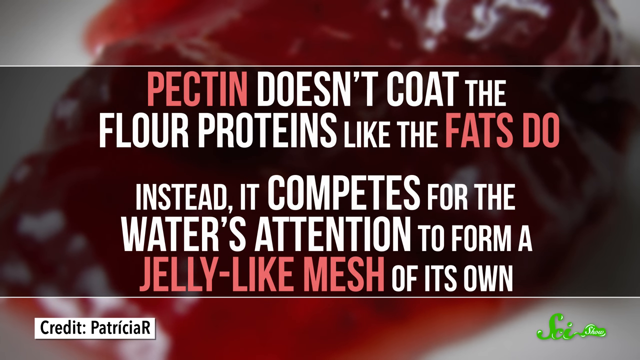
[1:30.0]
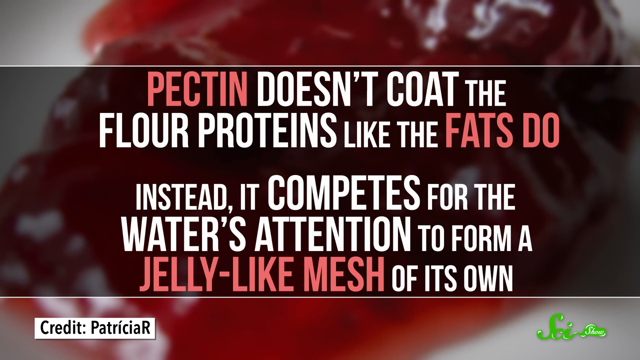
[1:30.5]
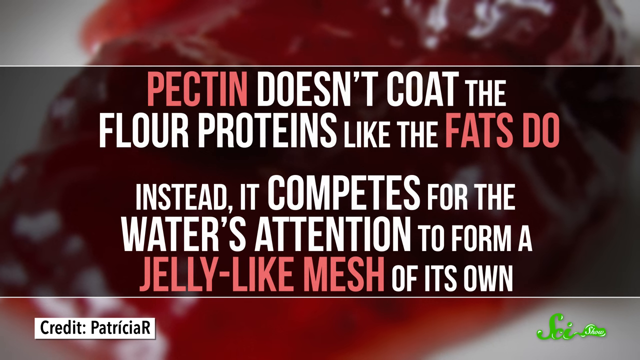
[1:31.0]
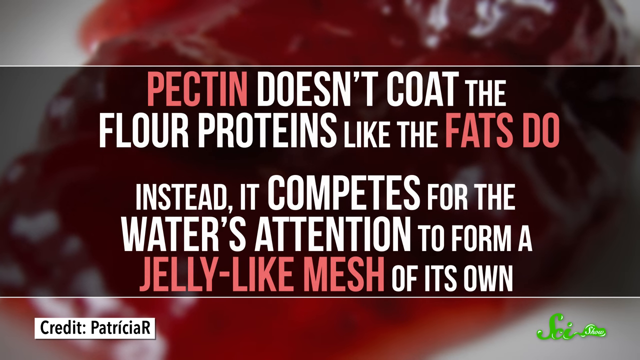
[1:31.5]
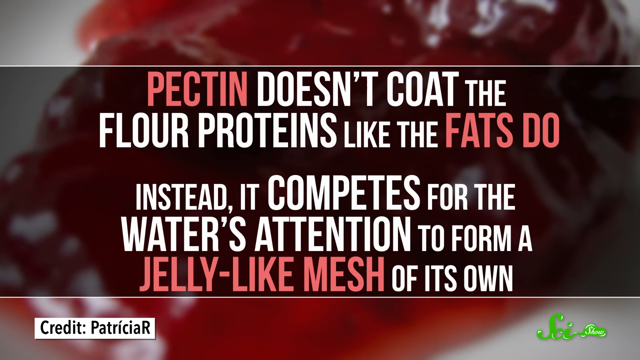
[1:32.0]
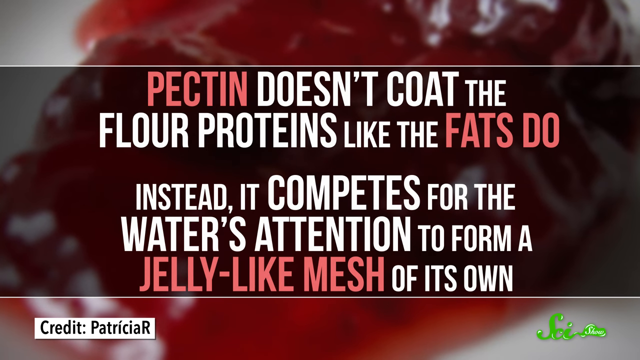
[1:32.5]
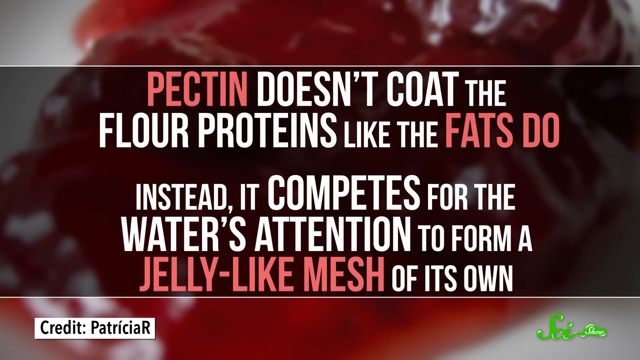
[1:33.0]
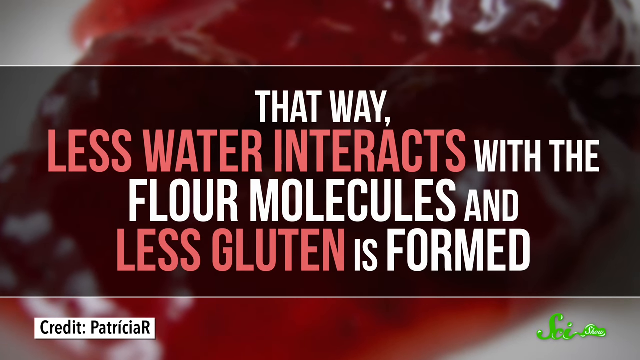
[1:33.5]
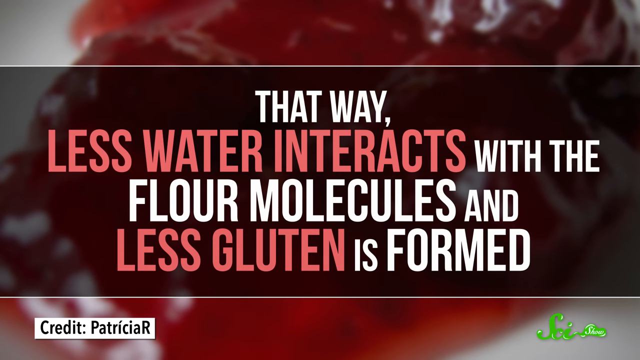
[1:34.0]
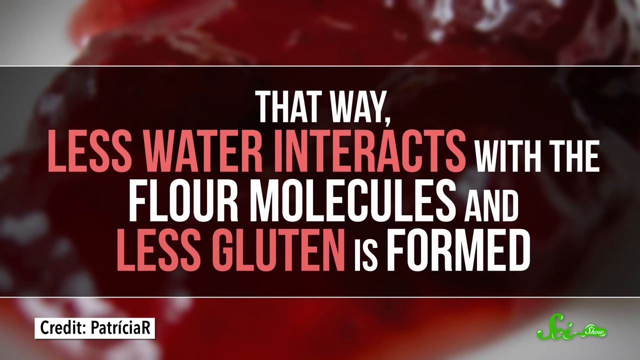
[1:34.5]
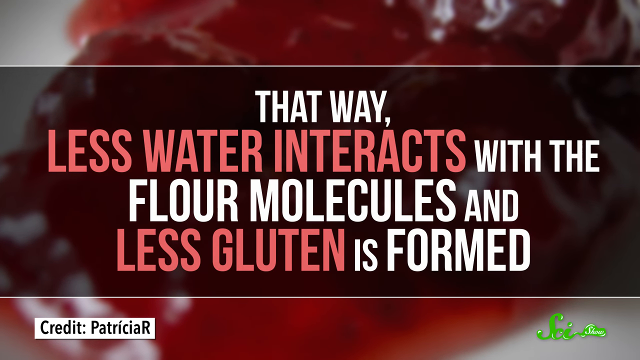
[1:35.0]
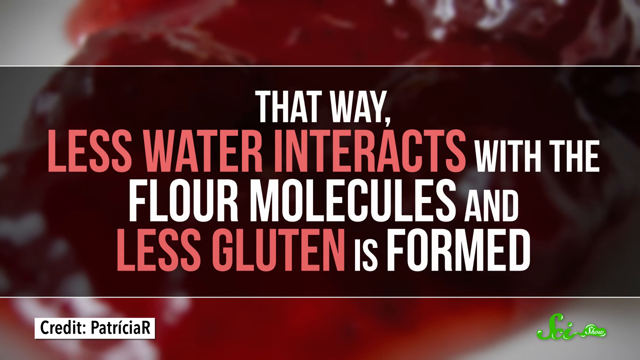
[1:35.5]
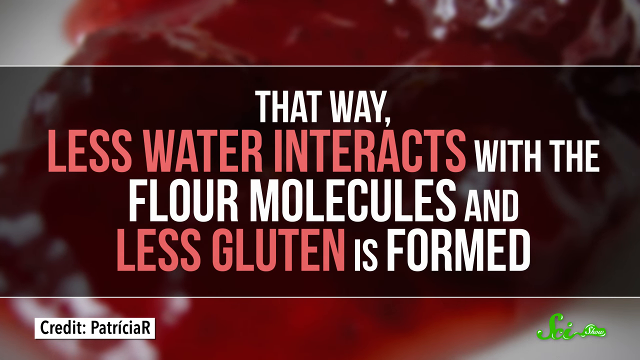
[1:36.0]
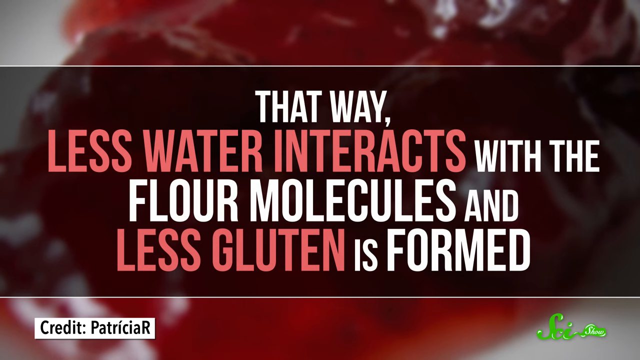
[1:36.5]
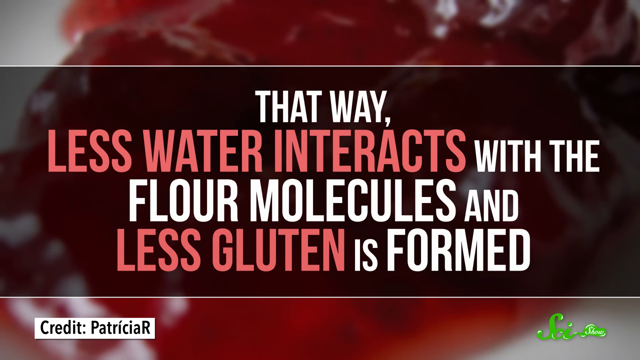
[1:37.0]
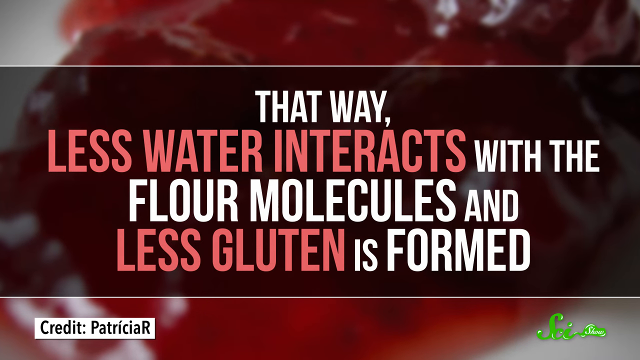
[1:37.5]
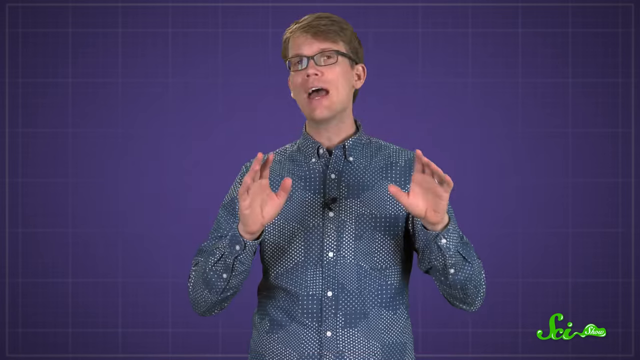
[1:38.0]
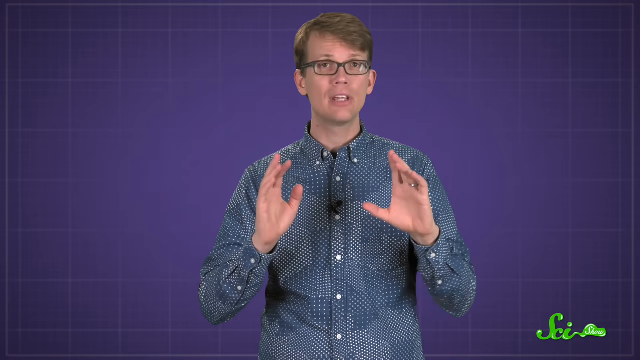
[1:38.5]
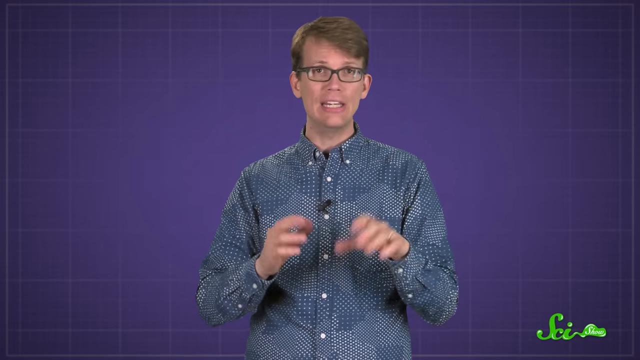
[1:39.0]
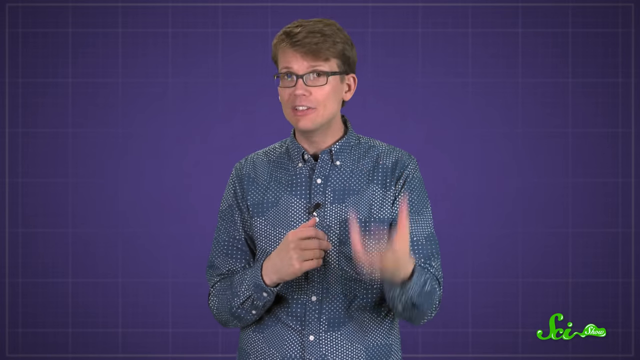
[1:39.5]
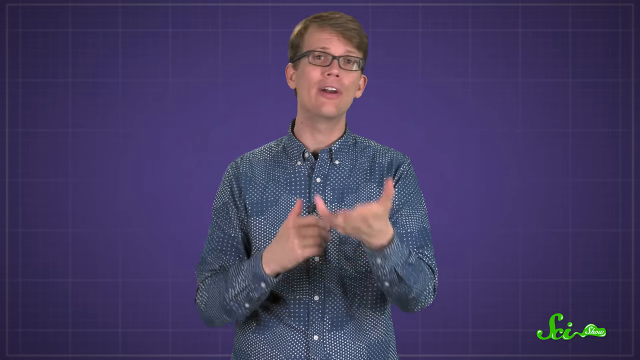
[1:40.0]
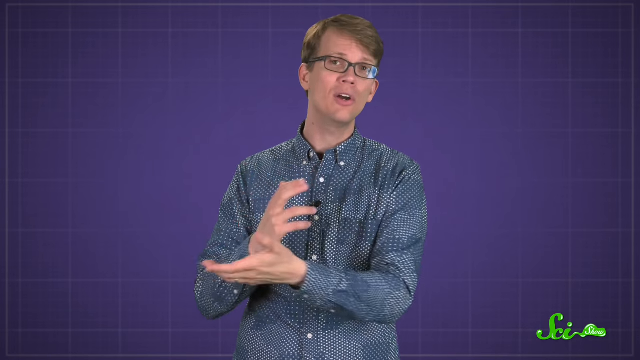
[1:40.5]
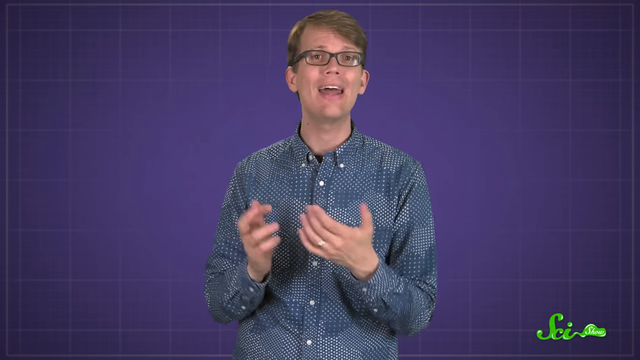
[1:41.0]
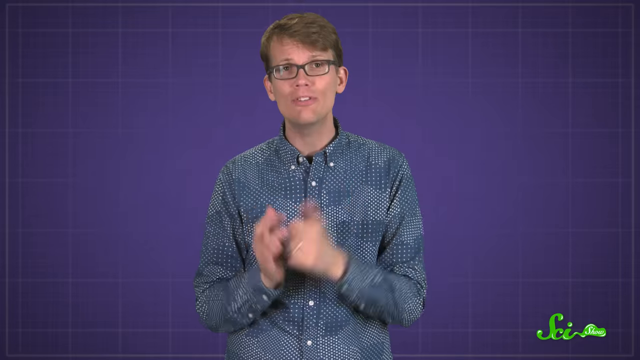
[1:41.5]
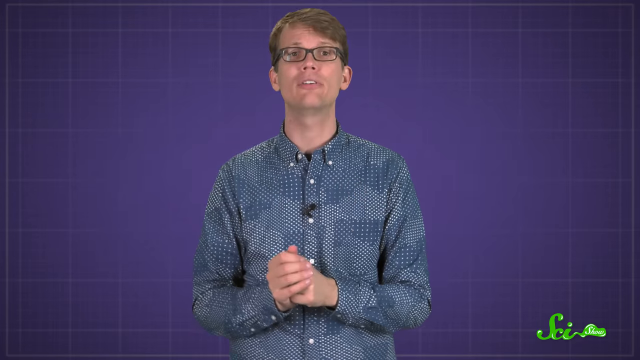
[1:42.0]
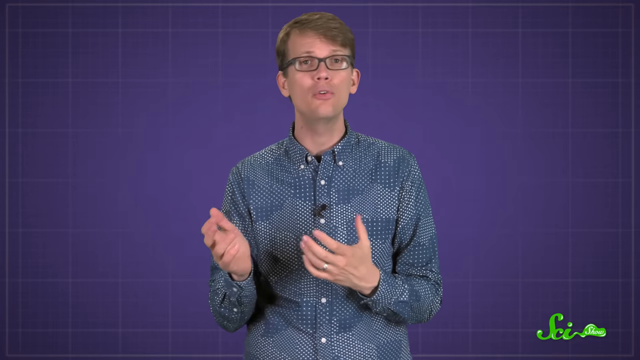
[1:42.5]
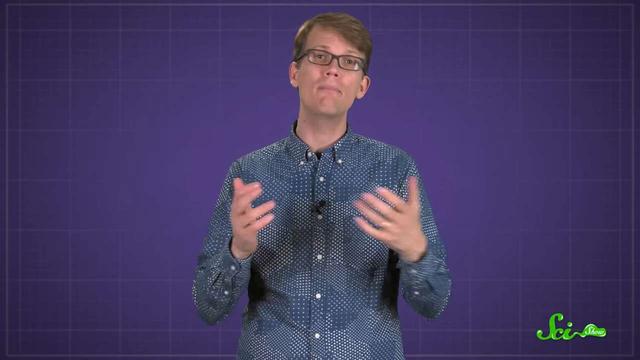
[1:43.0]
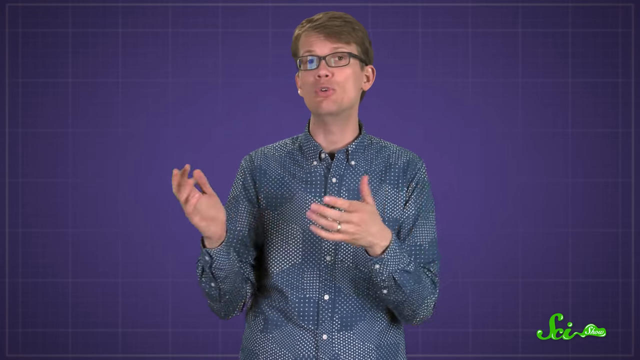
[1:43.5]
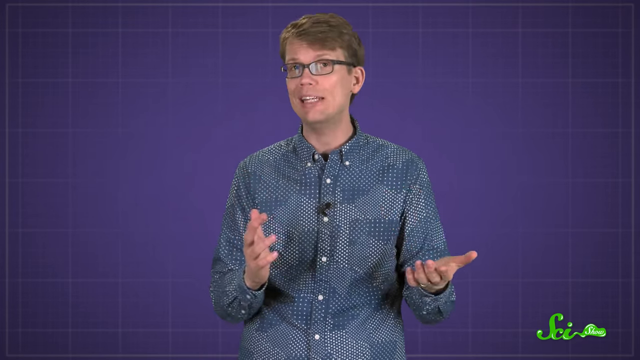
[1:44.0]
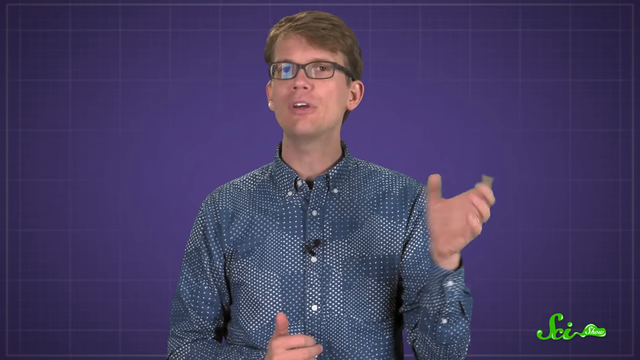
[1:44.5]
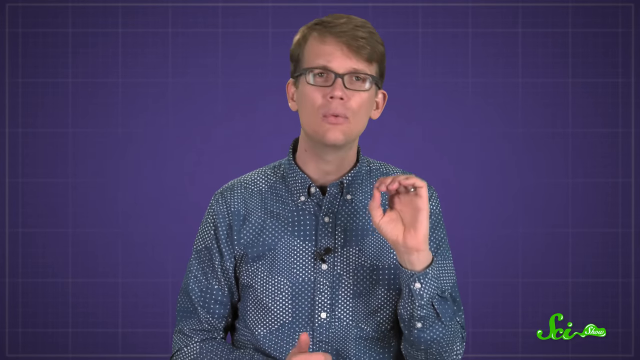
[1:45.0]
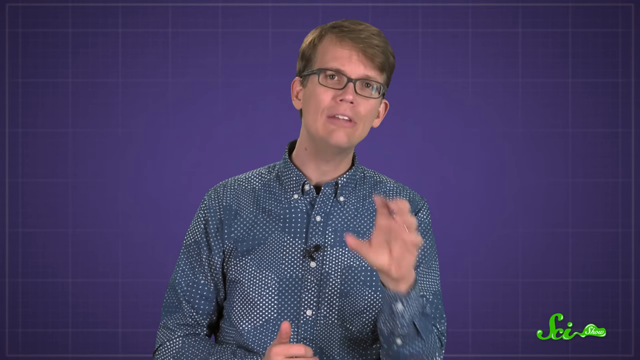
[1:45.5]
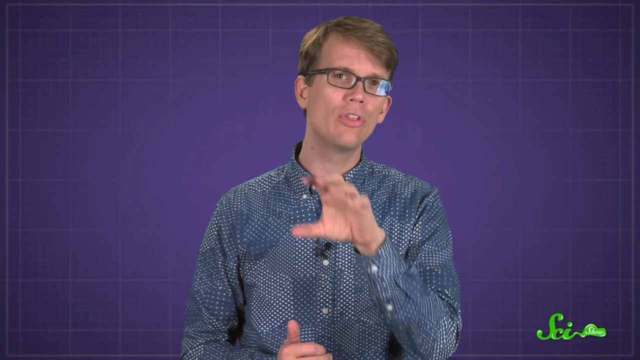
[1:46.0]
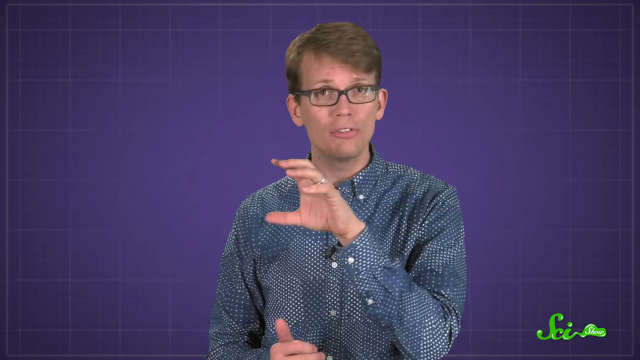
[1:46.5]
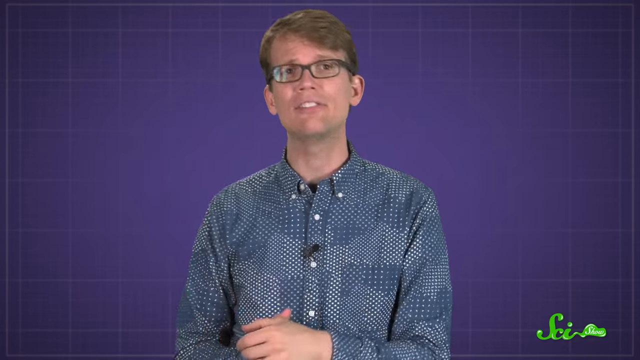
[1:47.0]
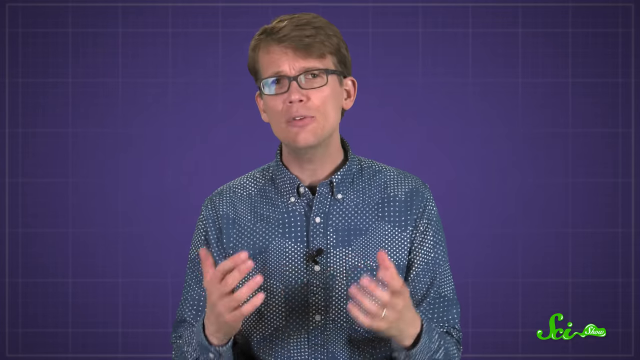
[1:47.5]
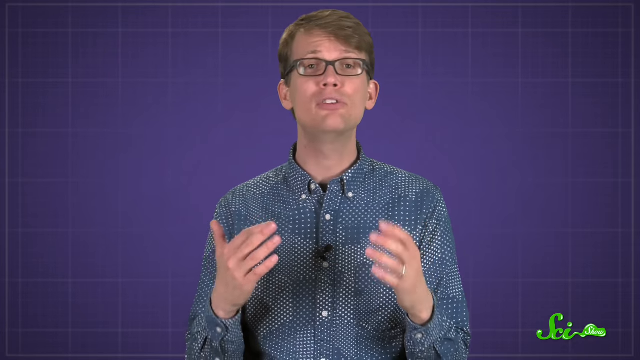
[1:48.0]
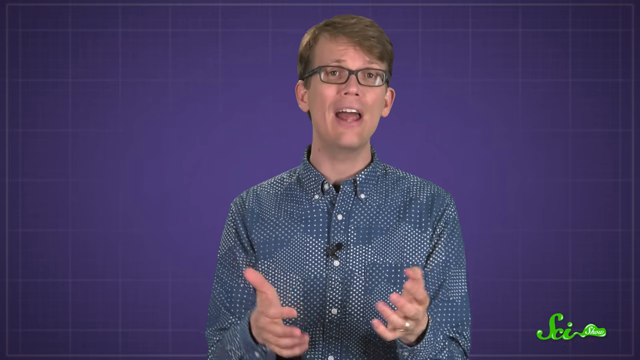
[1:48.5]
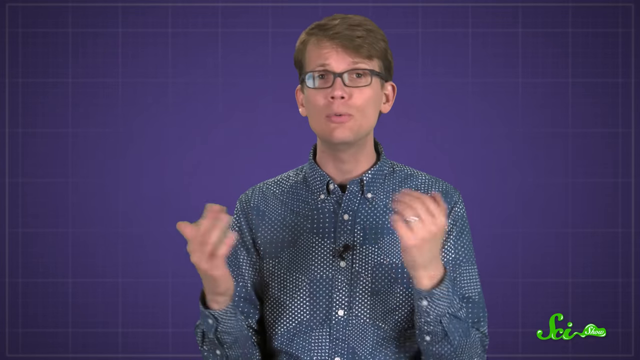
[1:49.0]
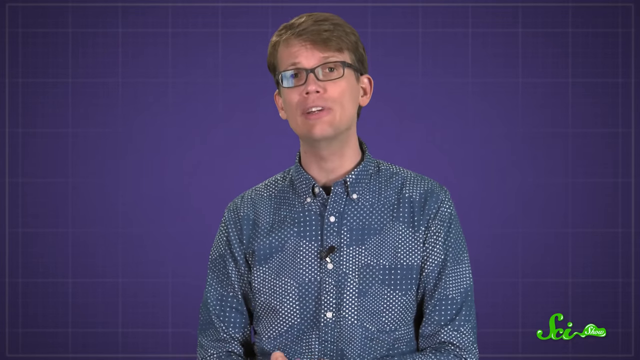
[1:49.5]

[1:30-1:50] The video, apparently about the science of cooking, shows "sponsored by Patrick Stubblefield" text. A close-up shows the inner part of a pie with text reading "pectin doesn't coat the flour proteins like the fats do. Instead, it competes for the water's attention to form a jelly-like mesh of its own," with some words in red, followed by text ending "less water interacts with the flour molecules and less gluten is formed." The man talks with his hands. He wears a wedding ring and has sort of dirty blonde hair. The text "less gluten is formed" appears, possibly repeated, while he keeps talking with his hands a lot.